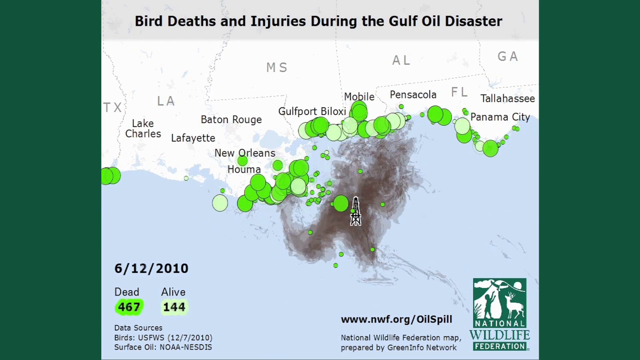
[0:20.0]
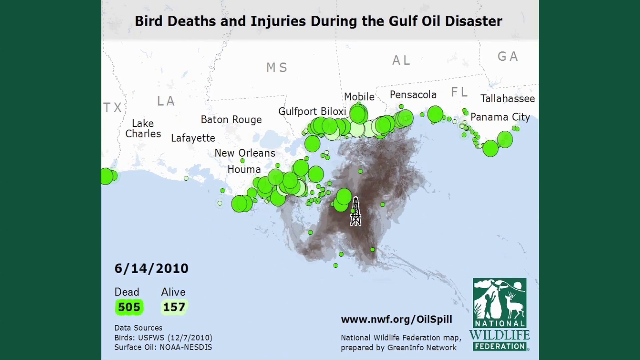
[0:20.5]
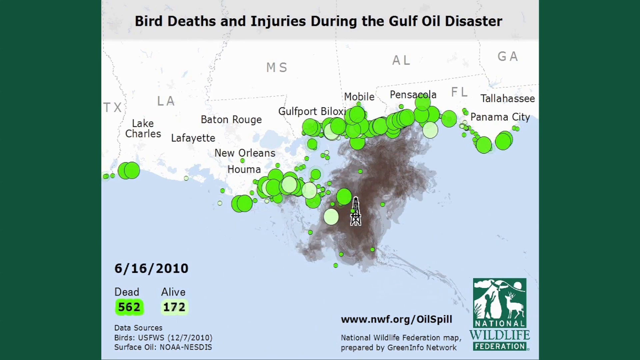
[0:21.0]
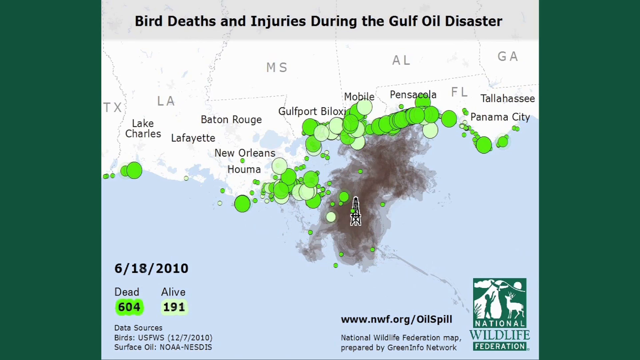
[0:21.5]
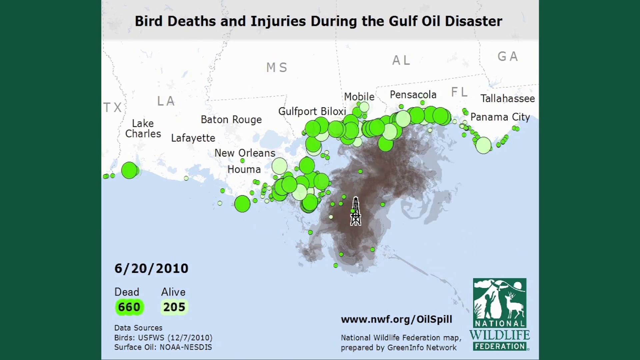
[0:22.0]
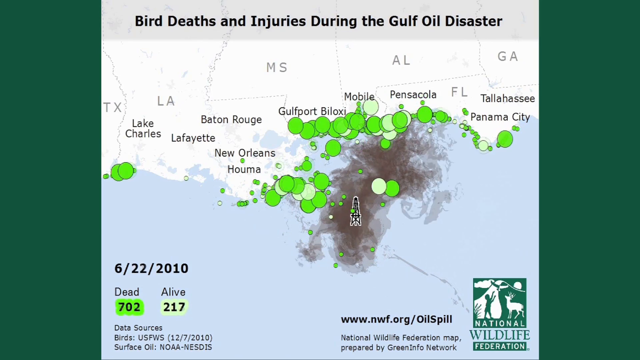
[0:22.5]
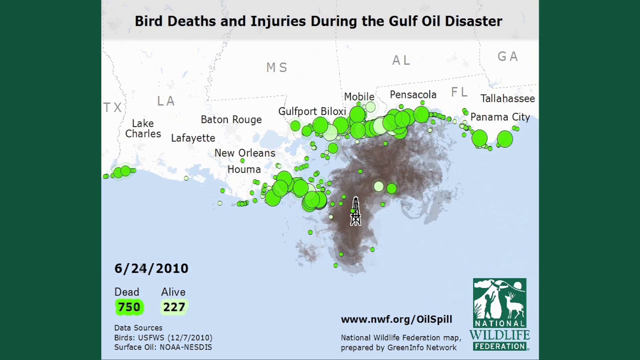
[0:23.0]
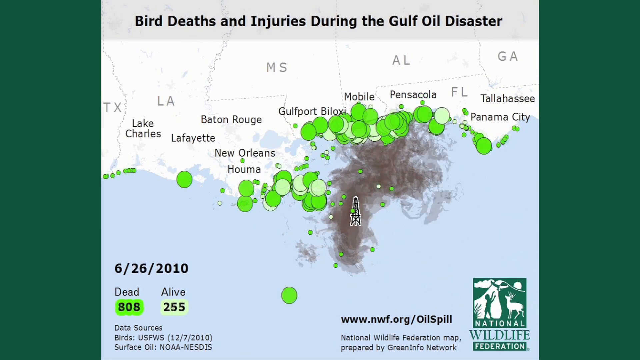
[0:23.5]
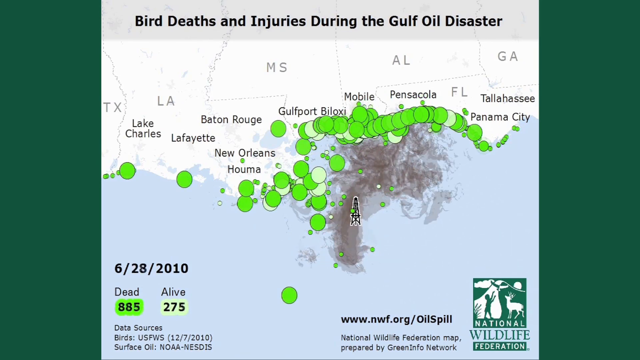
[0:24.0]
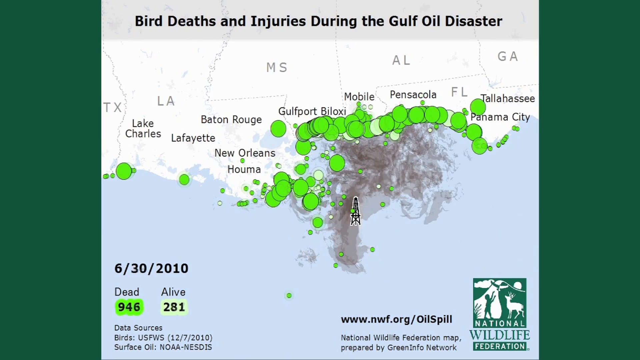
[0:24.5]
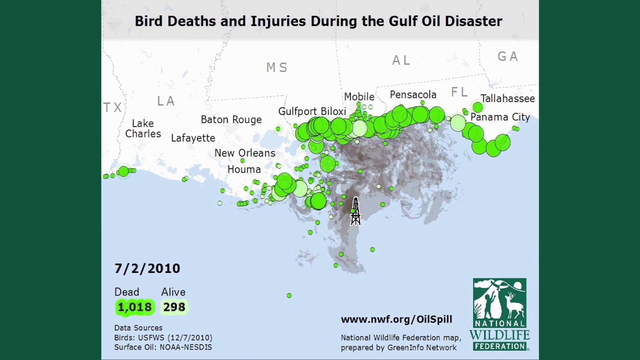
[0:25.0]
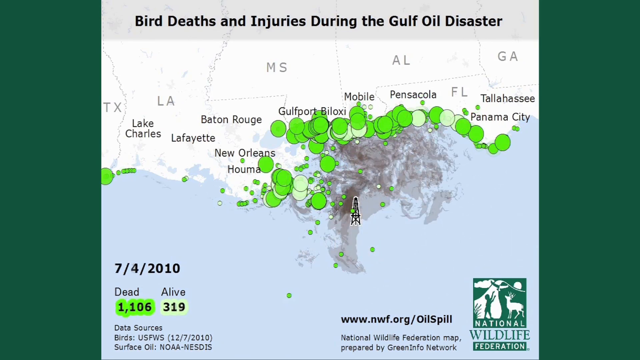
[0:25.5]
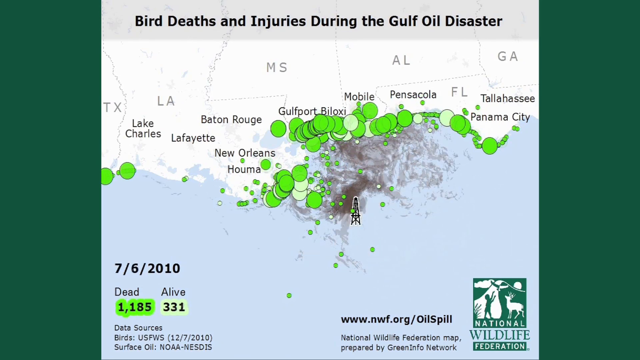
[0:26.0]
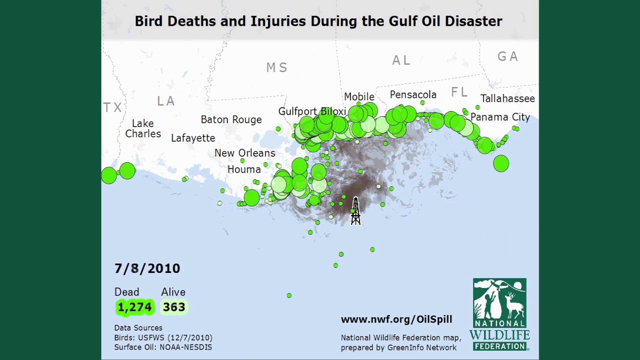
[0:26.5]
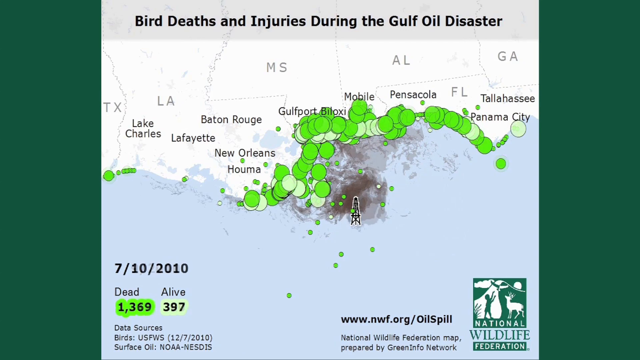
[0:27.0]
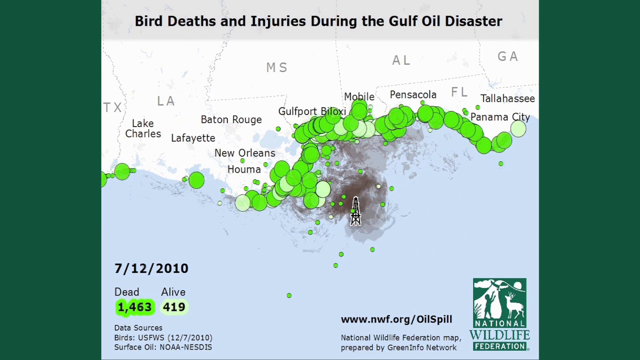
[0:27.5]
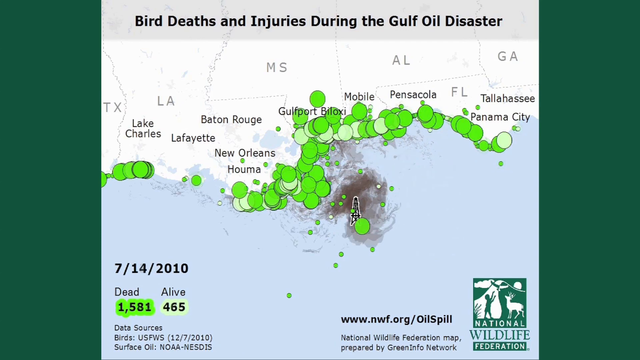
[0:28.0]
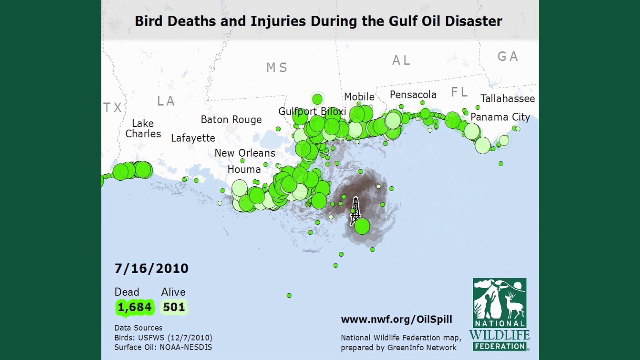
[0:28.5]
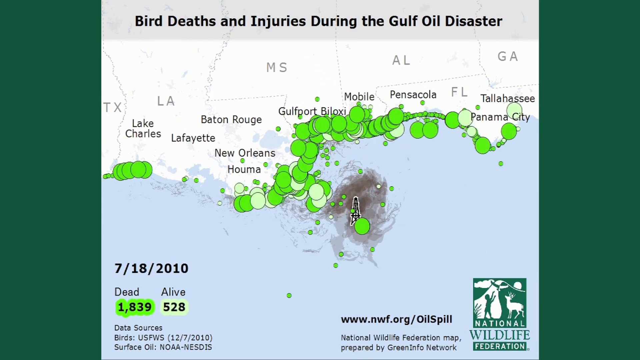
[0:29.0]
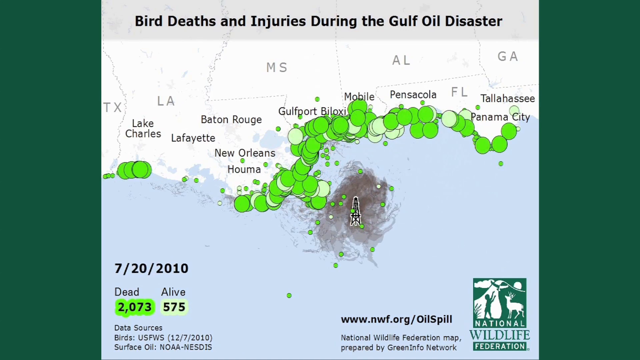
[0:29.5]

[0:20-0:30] A map tracks bird deaths during the Gulf oil disaster, with black text at the top reading "bird deaths and injuries during the Gulf oil disaster." The map shows the Gulf of Mexico, with blue water at the bottom and Texas, Louisiana, Missouri, Alabama, Florida and Georgia at the top. Along the south coast are many green and light green dots representing dead or alive birds. In the bottom left, the date reads "June 12, 2010," with "dead" highlighted in green at 467 and "alive" highlighted in light green at 144. The date advances very quickly day by day through June 13, 14, 15 and on through all of July, while the dots along the coast appear and disappear and the numbers keep climbing. It ends on what looks like July 20th, 2010, with dead at 2,073 and alive at 575. In the middle of the ocean there appears to be a black tower representing the oil rig, with a brown smudge spreading out of it; the smudge is very large at first, extends up toward Florida, and grows lighter toward July while also moving toward the coast.